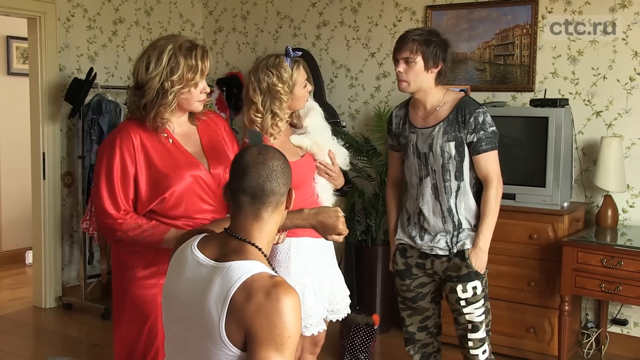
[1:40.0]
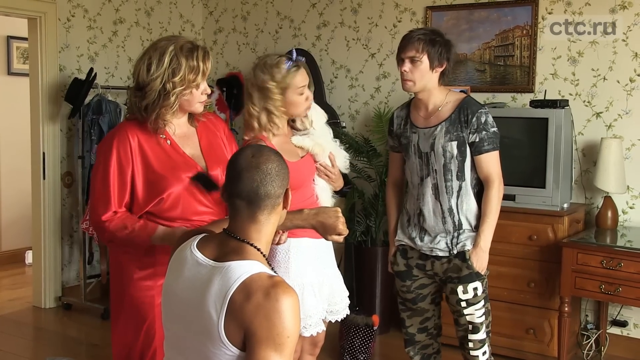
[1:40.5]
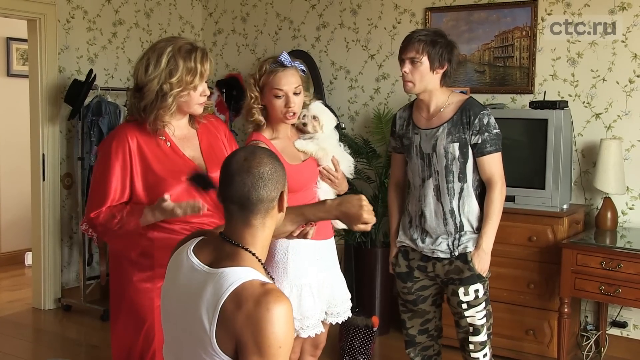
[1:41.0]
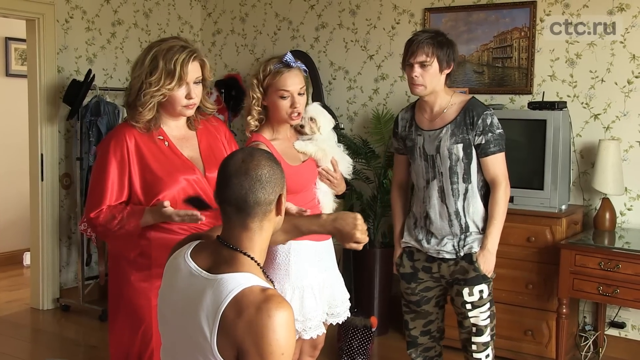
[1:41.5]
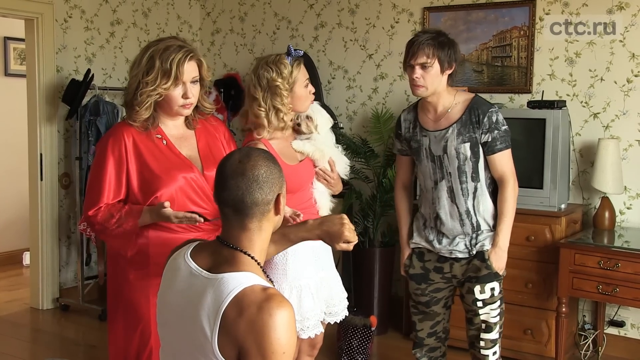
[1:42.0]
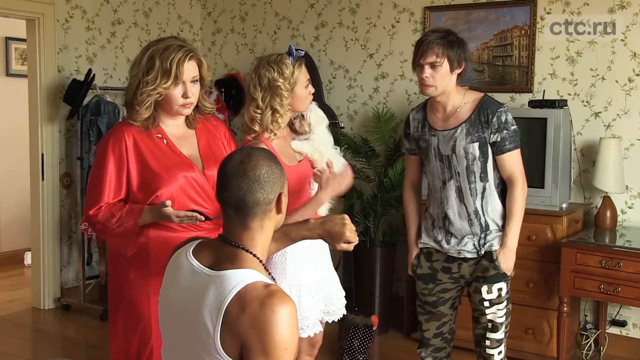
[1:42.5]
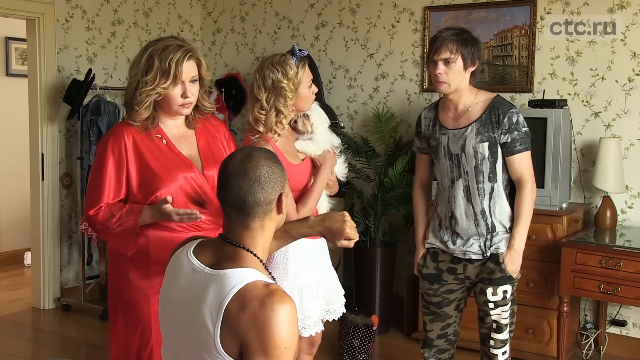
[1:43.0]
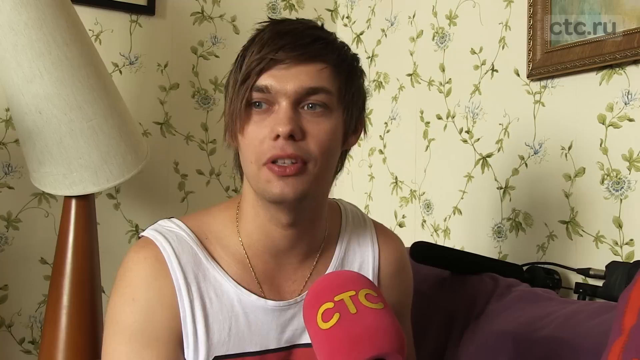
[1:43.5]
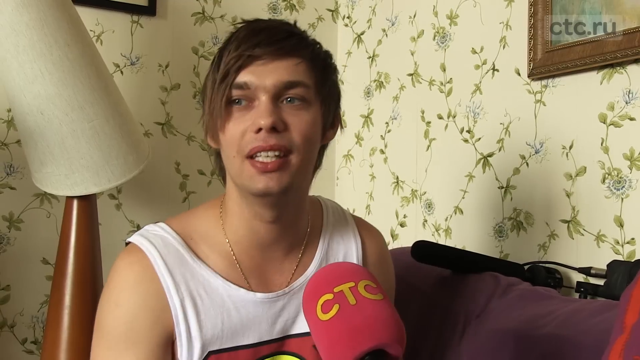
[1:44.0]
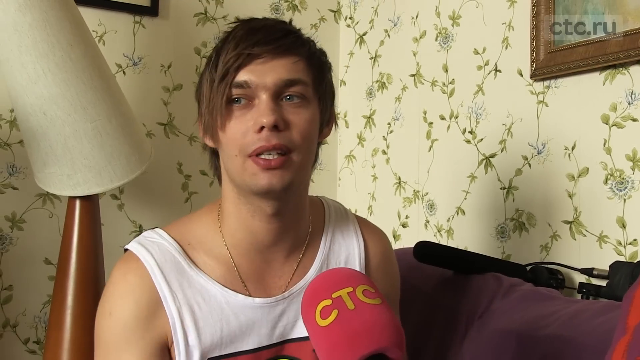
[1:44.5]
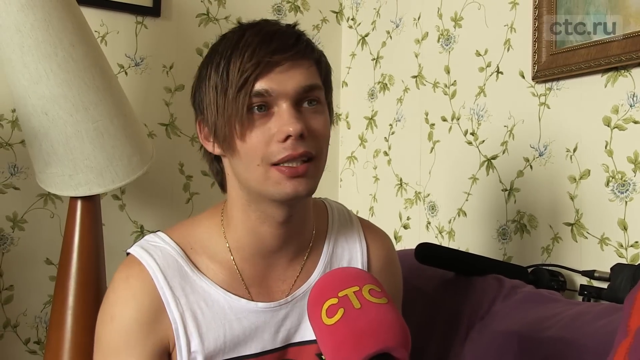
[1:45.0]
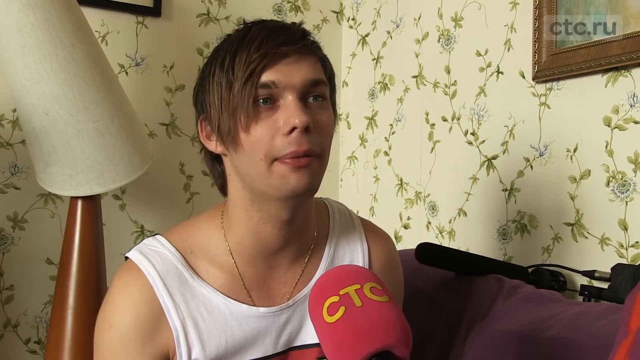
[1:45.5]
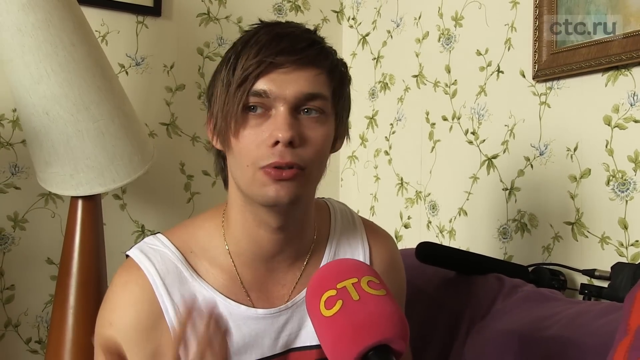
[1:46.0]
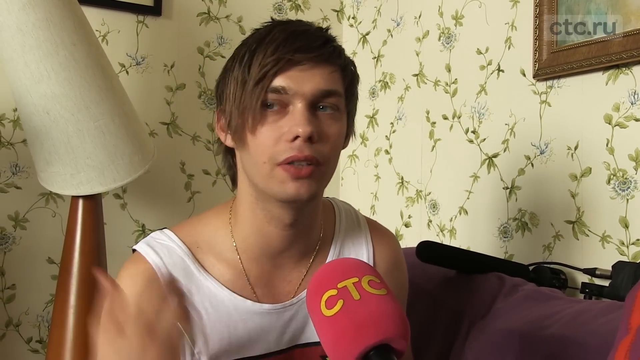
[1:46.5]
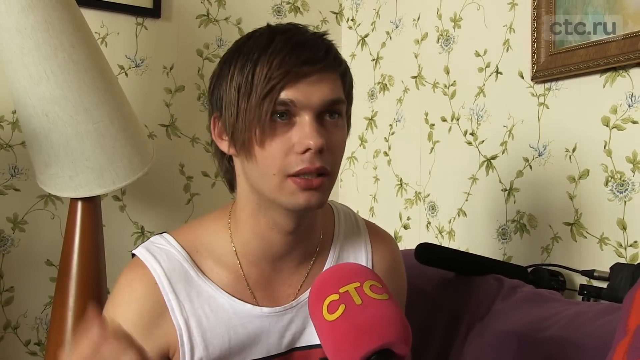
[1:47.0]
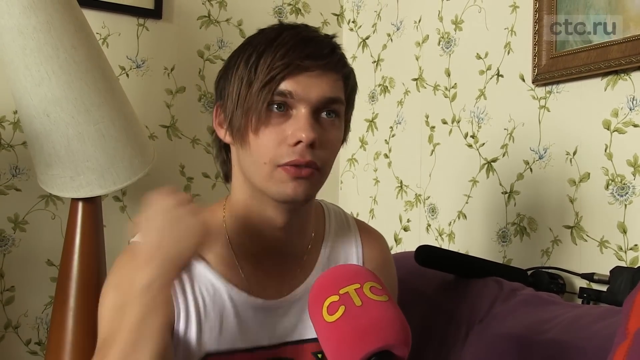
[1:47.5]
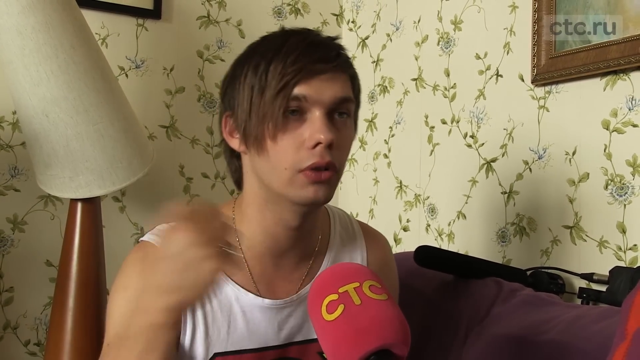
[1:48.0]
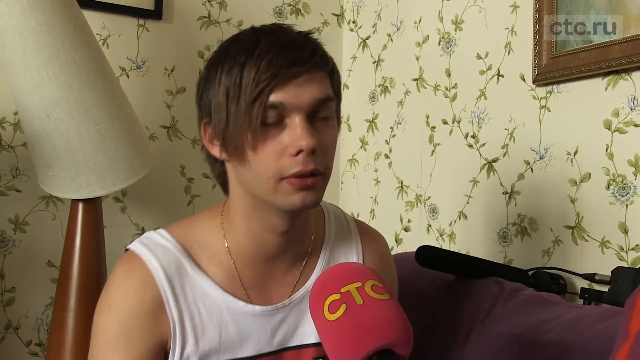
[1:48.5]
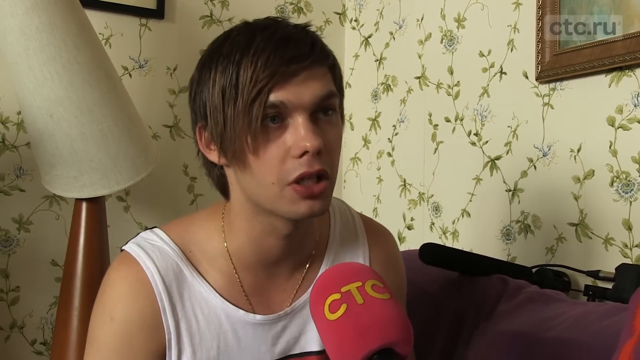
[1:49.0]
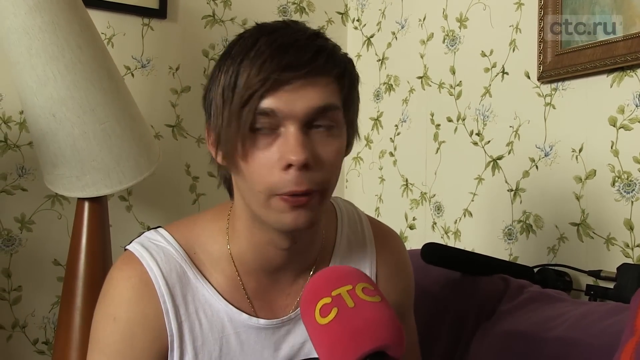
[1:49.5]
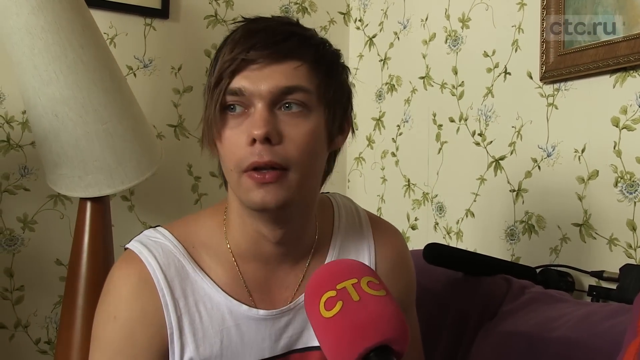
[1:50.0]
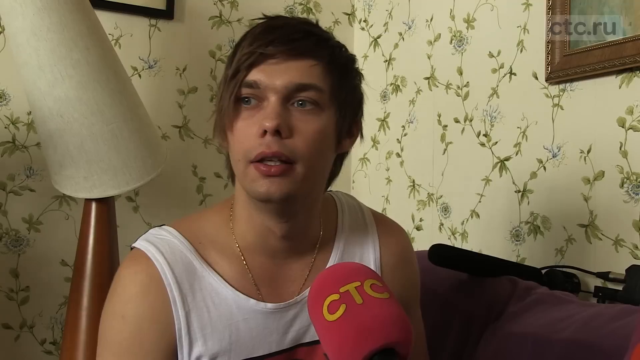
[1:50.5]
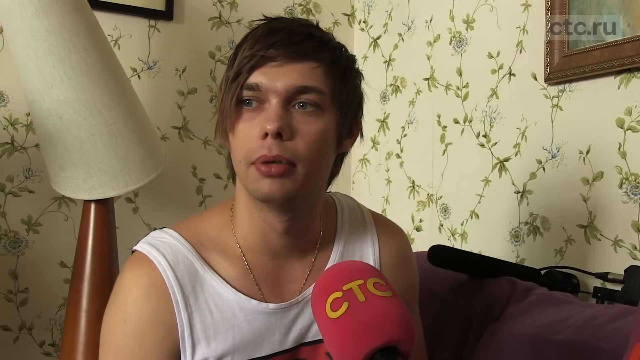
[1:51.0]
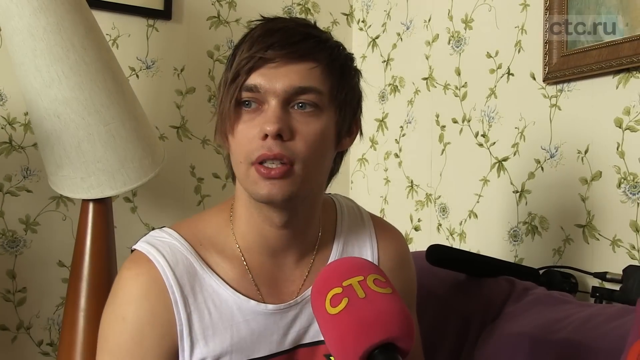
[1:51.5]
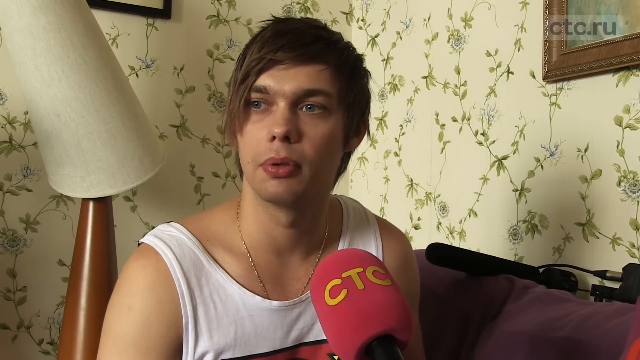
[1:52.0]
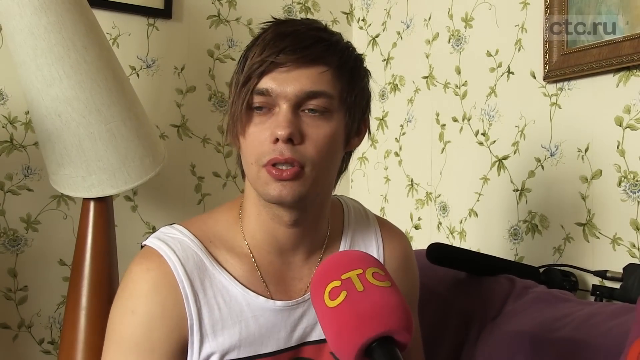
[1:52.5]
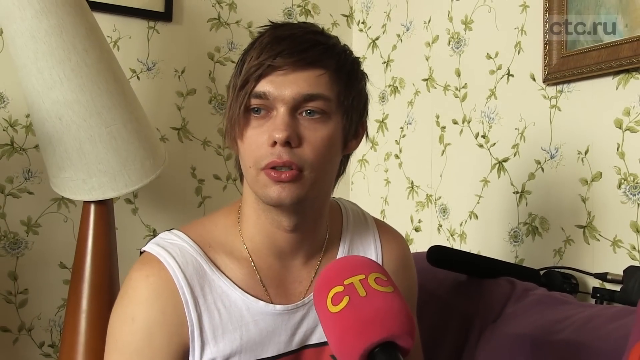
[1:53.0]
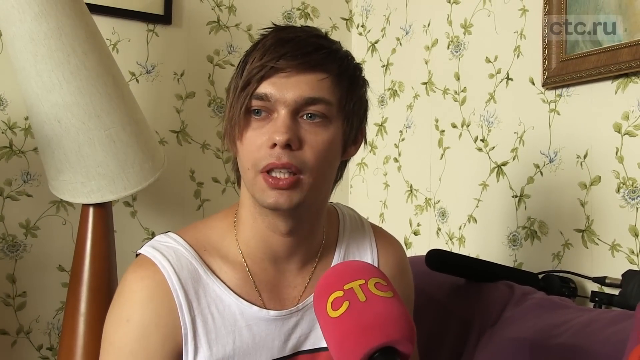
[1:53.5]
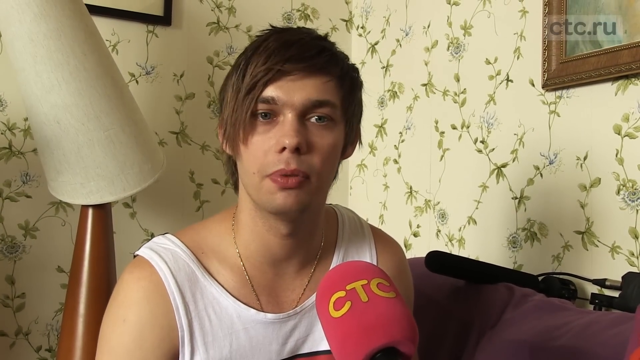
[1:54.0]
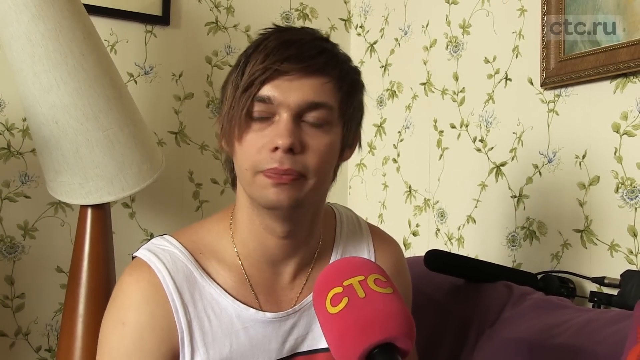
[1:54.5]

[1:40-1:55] The four actors are in the bedroom set with the white dog: the white guy in camouflage pants, the black guy in a white sleeveless shirt sitting on the bed whose arm has just been bitten, the older heavyset lady in the red robe, and the younger blonde girl with the white dog. The video then goes back to the interview of the white actor in the Superman shirt, sitting on the couch with the pink CTC microphone, talking. The scene alternates only between the bedroom set and the interview couch, and no new characters appear.